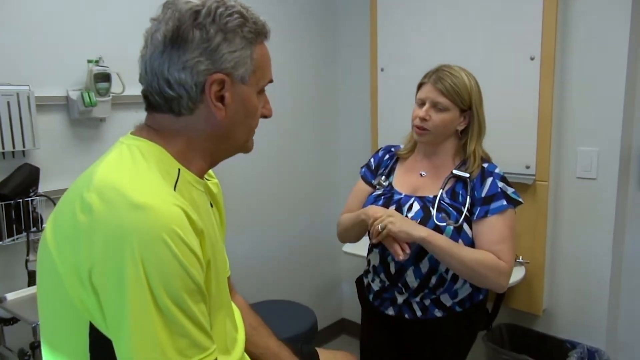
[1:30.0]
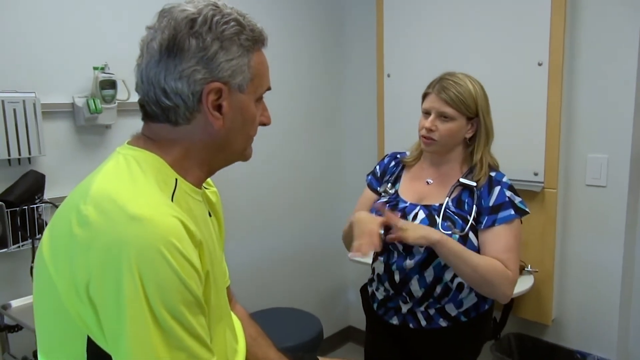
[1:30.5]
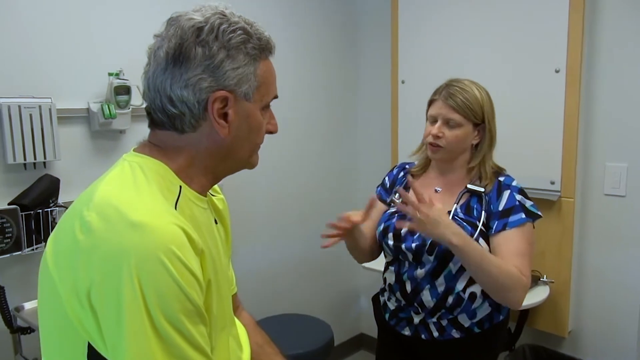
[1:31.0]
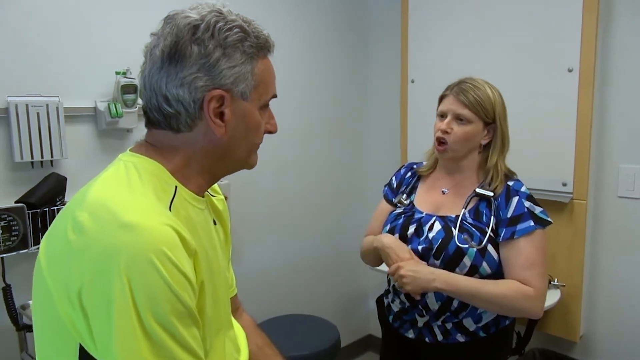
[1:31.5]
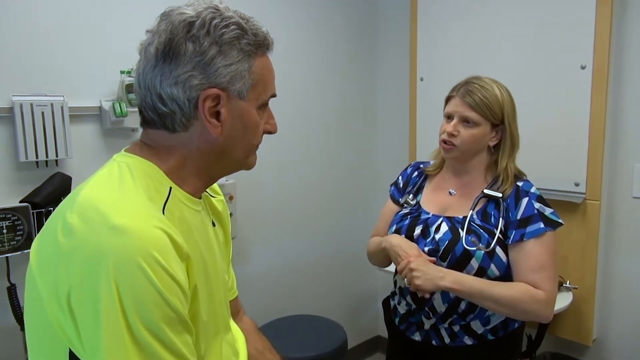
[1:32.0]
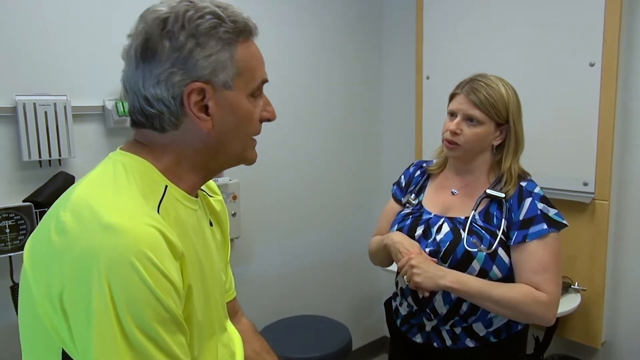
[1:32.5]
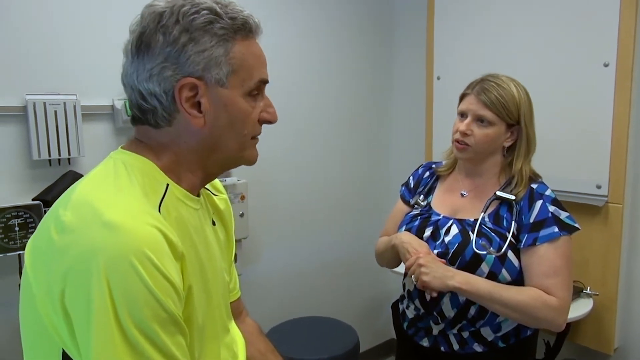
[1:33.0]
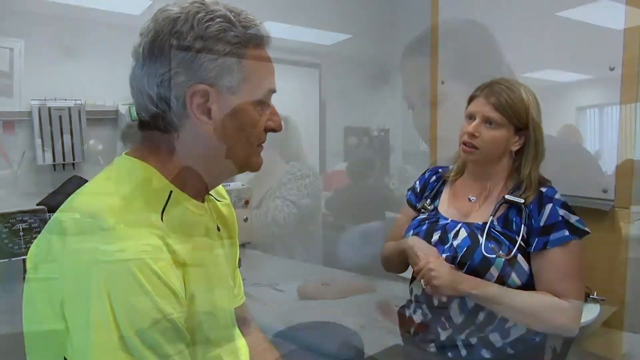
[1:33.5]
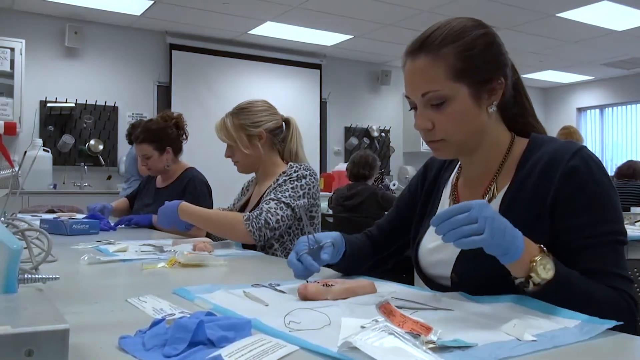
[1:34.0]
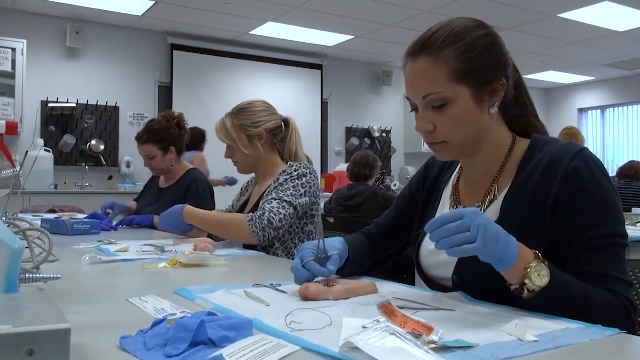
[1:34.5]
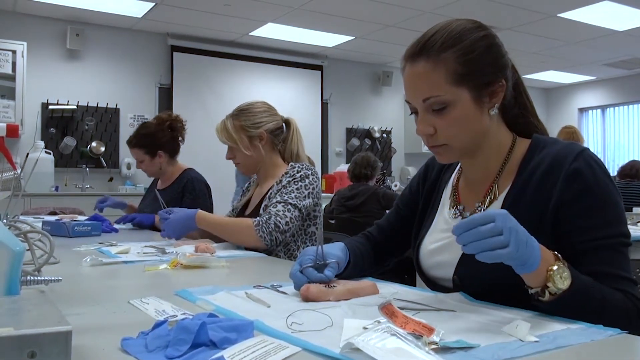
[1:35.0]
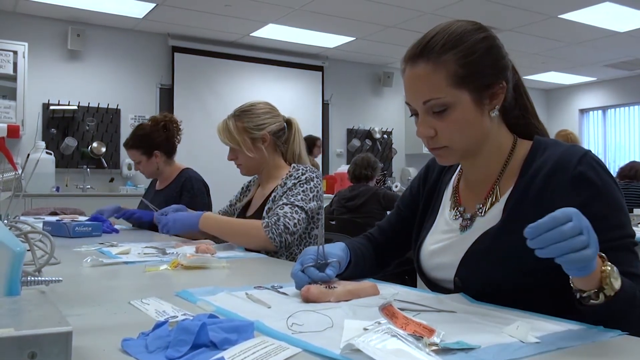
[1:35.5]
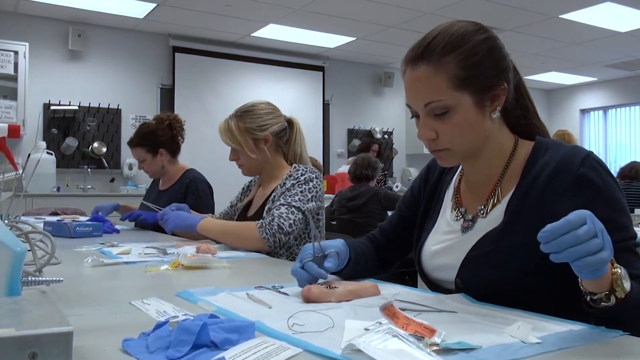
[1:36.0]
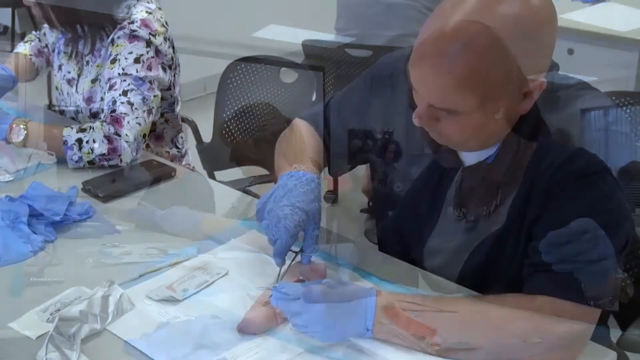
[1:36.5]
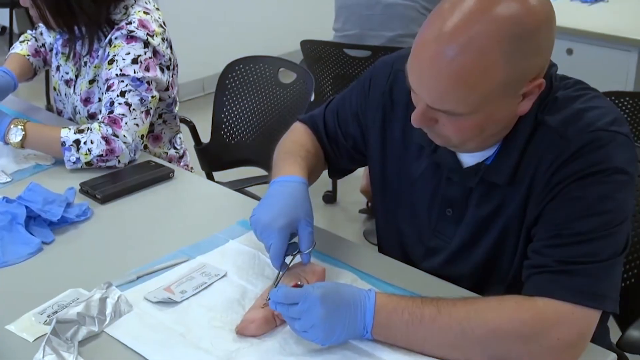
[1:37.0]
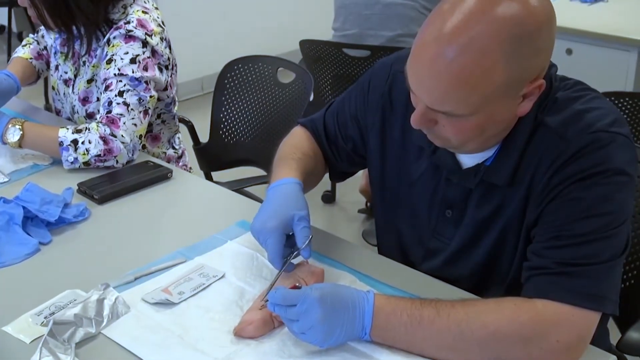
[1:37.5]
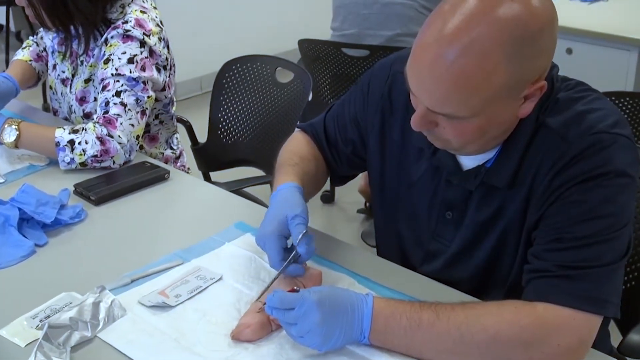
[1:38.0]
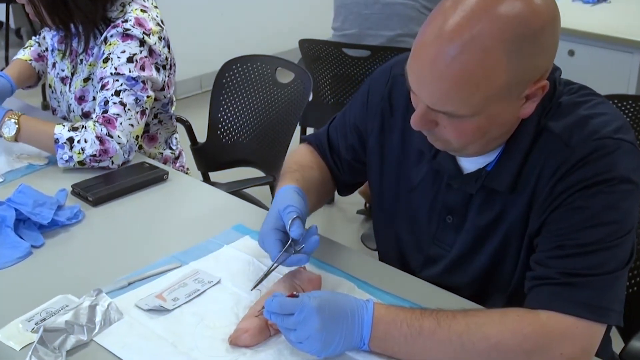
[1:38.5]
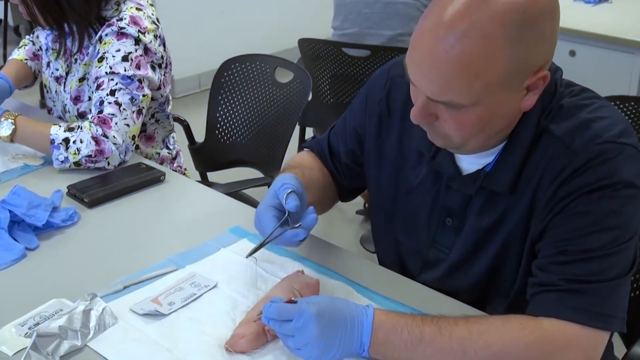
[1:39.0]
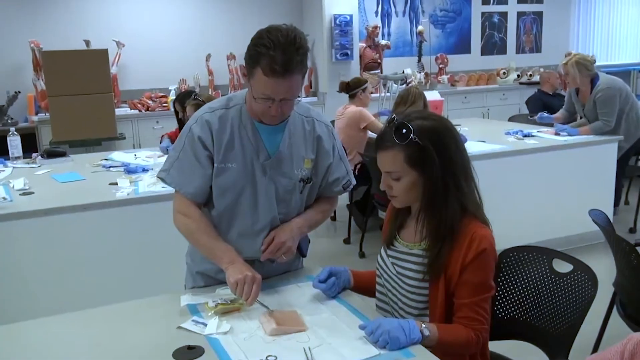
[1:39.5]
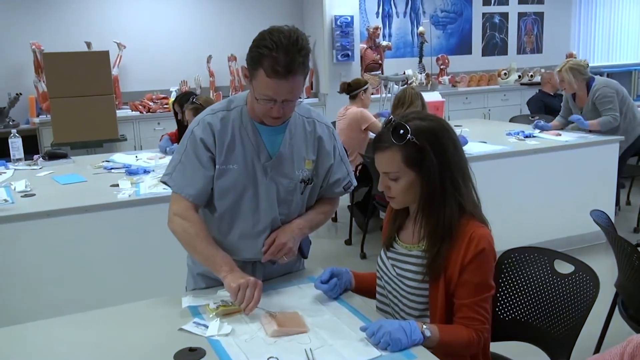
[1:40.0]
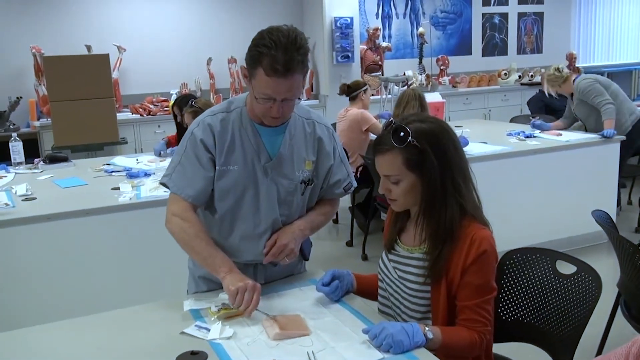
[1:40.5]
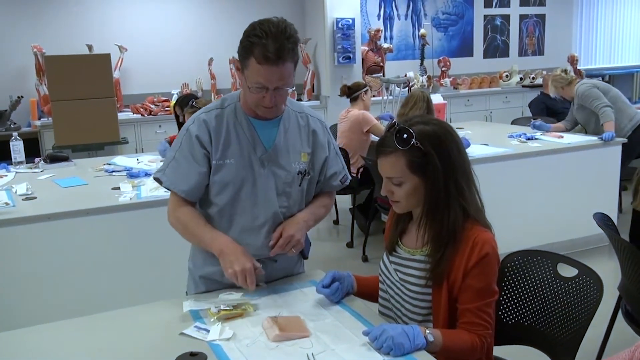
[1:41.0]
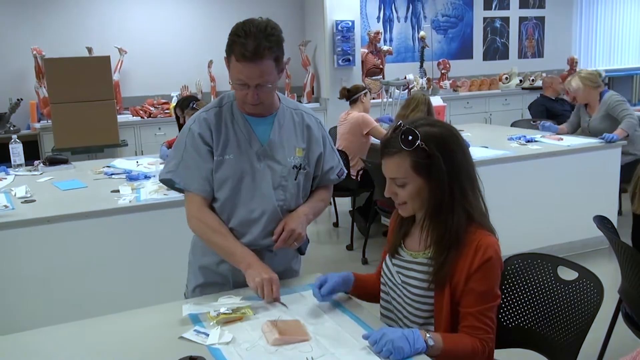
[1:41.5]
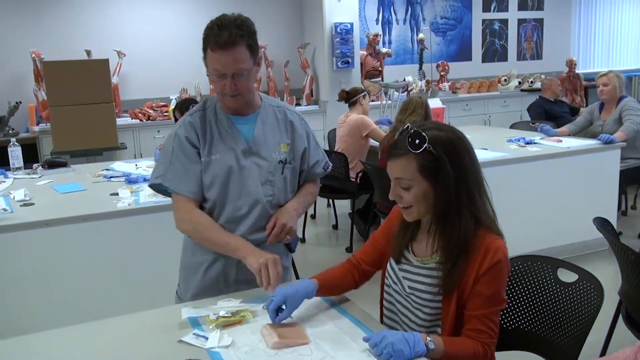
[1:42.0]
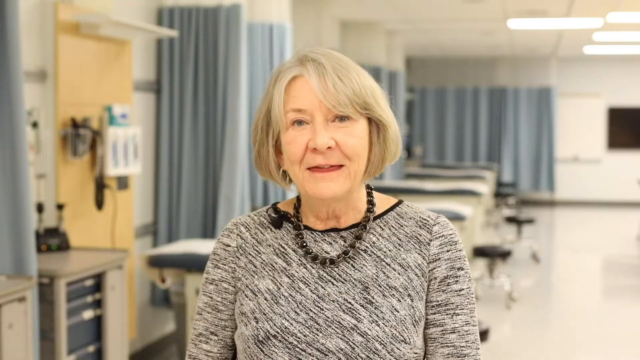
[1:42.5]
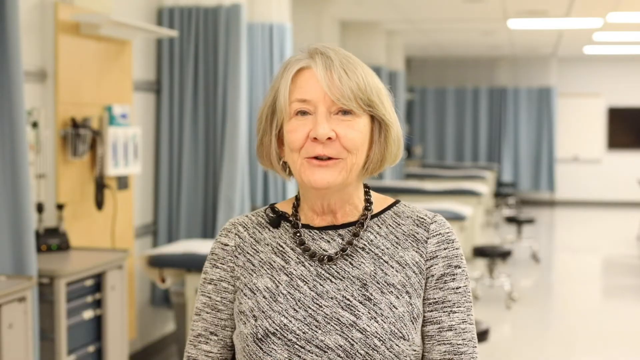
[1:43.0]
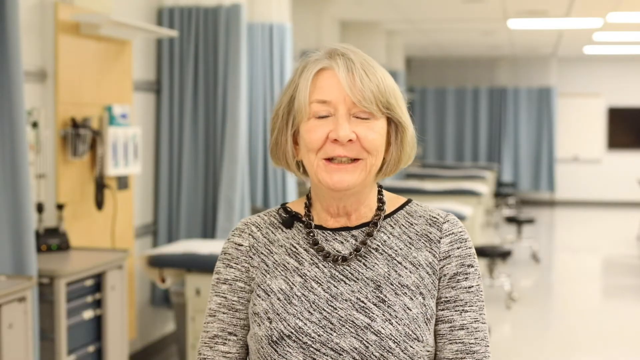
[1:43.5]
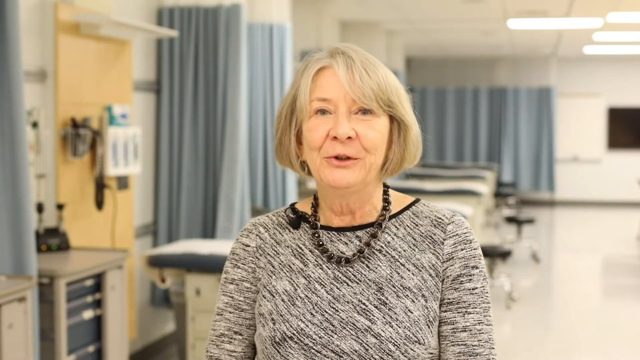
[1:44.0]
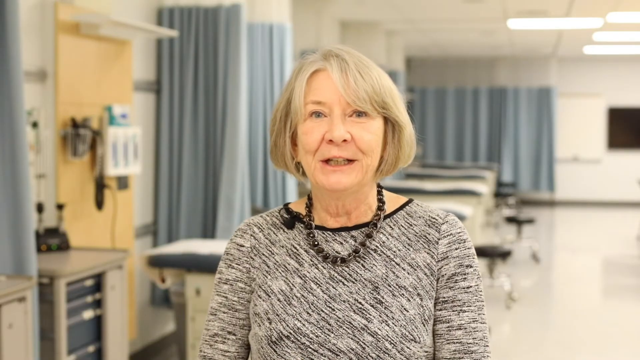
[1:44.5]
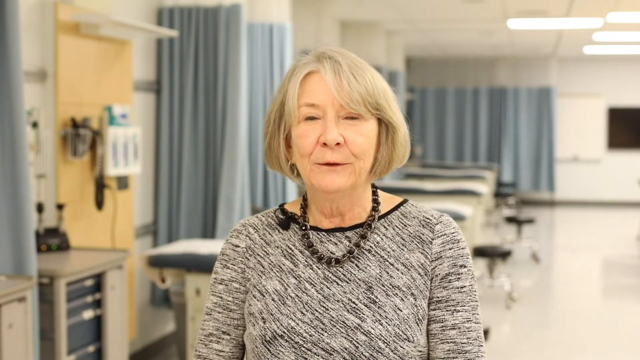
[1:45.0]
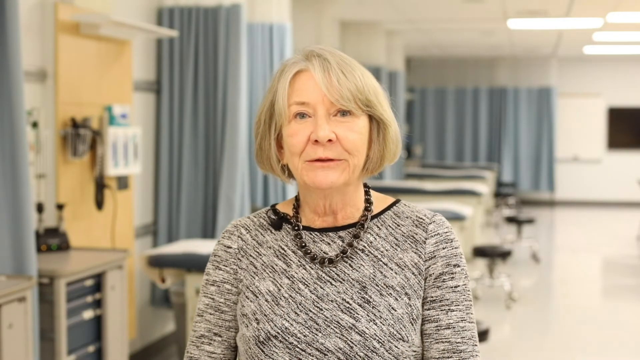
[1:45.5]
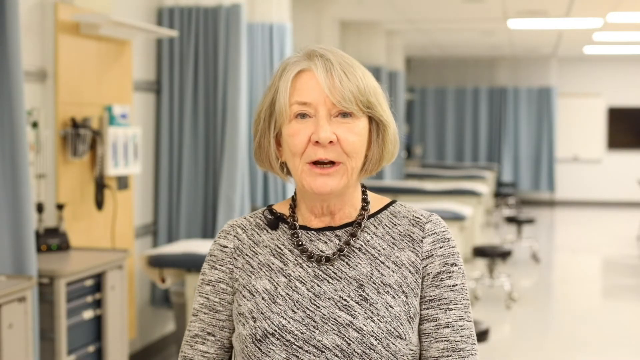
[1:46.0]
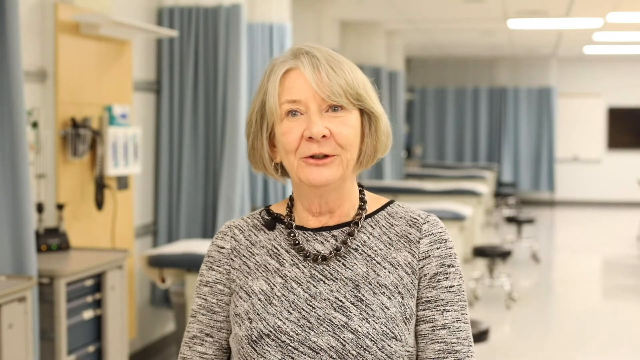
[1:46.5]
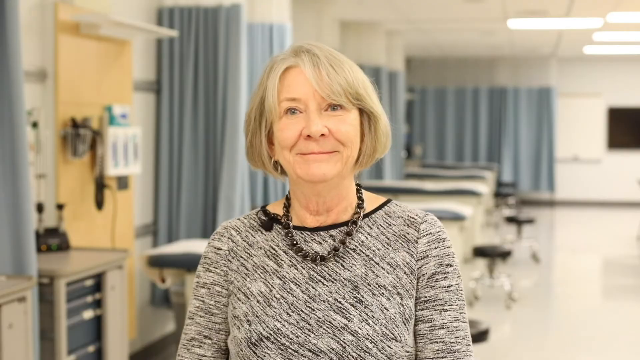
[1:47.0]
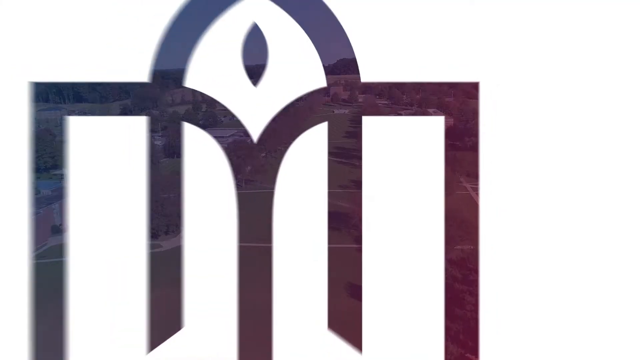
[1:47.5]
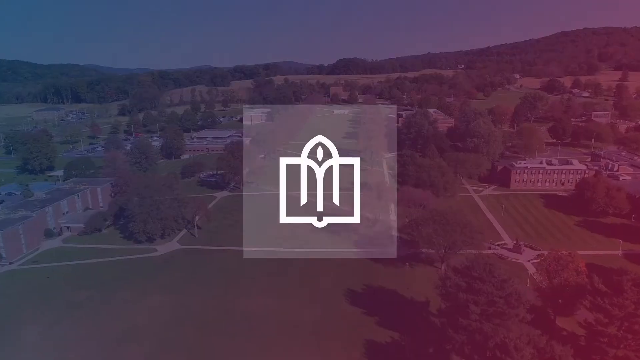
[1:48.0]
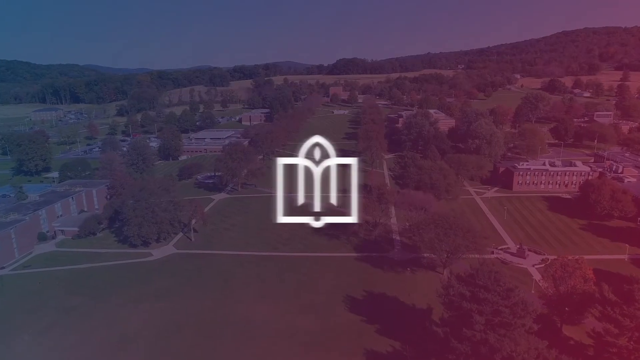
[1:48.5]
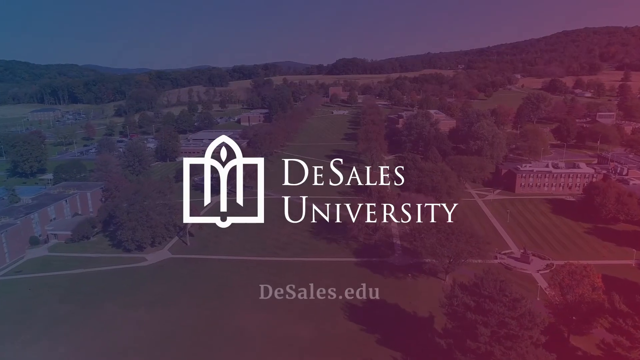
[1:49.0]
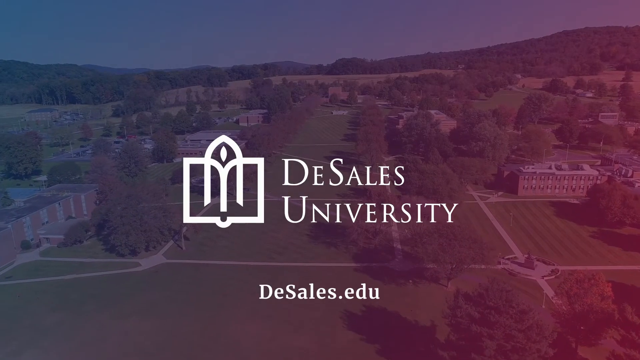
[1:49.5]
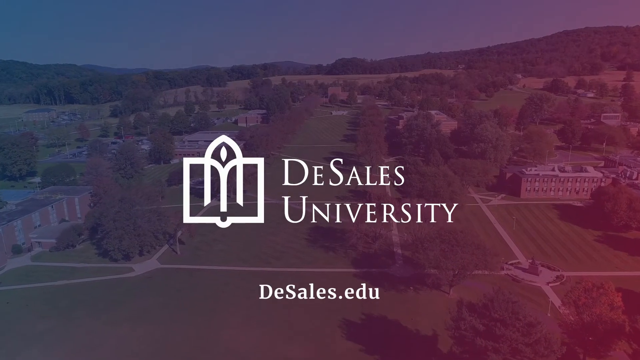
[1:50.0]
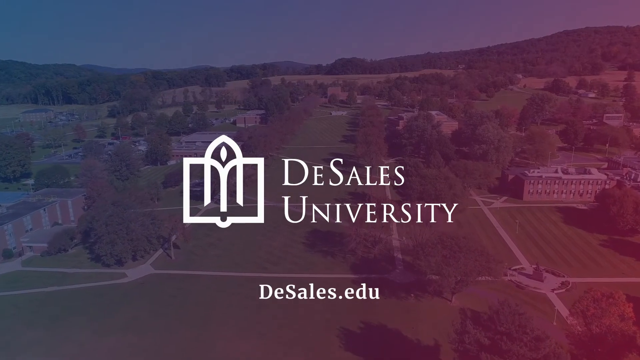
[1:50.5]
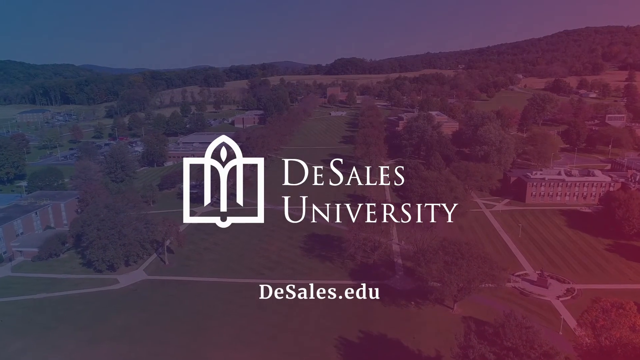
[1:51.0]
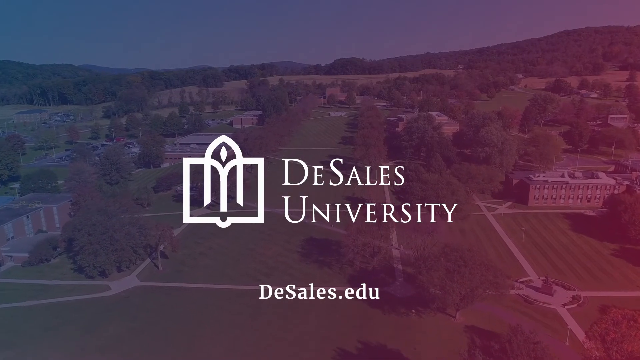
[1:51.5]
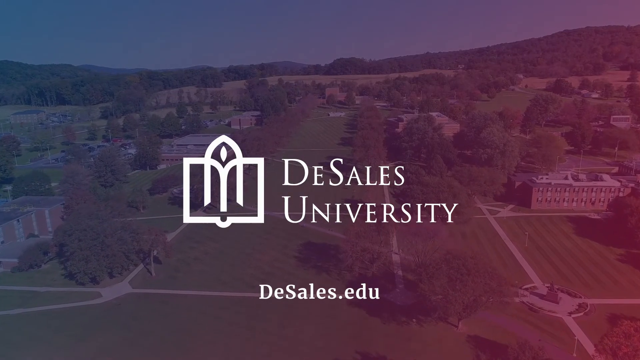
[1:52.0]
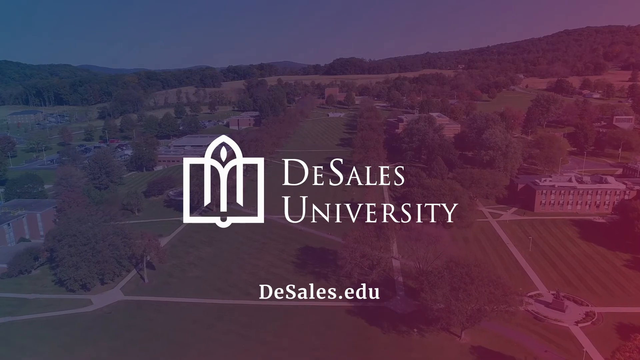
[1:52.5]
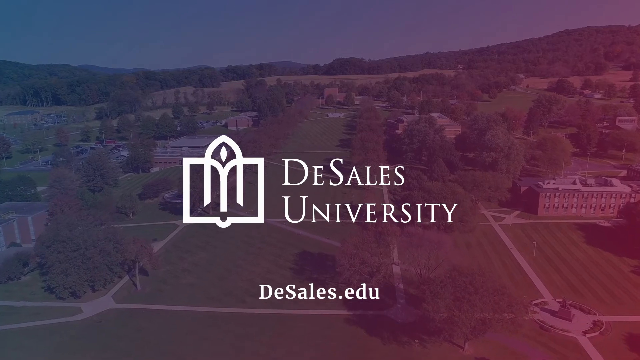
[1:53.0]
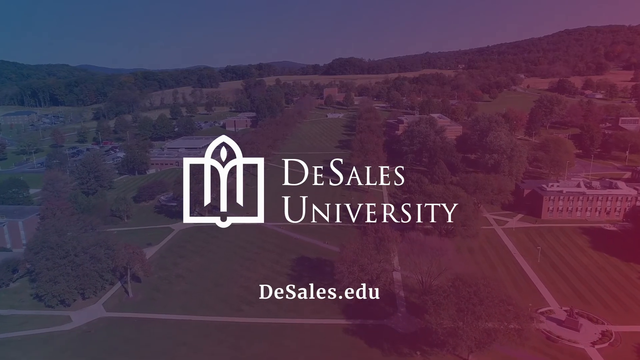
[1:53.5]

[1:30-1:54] The man in the yellow shirt talks to the woman in the blue shirt in a clinic-like or hospital-like setting. The scene switches to nurses wearing blue latex gloves working at a table with all sorts of tools in front of them. Next, a bald man in blue latex gloves also uses tools, and next to him a woman wearing a watch uses tools too. A doctor or nurse then helps a woman in a red shirt, and they work using tools. The woman from the beginning of the video, with mid-length white or blonde hair and a black necklace, speaks to the camera in the clinic-like setting. The video ends with a logo of something, possibly a book, and the text "DeSales University" followed by the website "desales.edu".